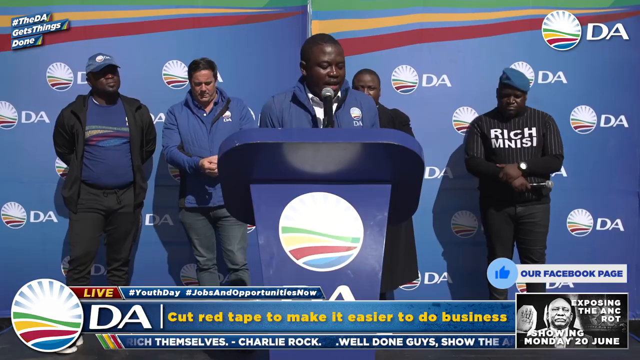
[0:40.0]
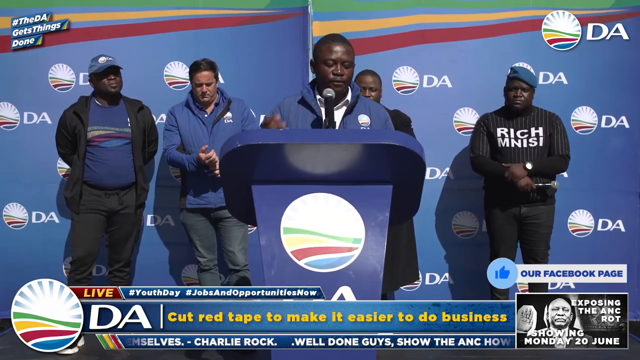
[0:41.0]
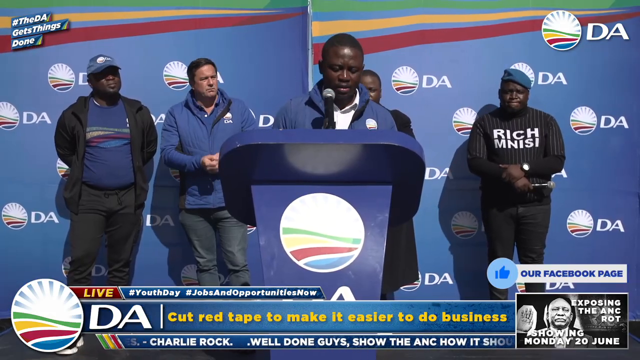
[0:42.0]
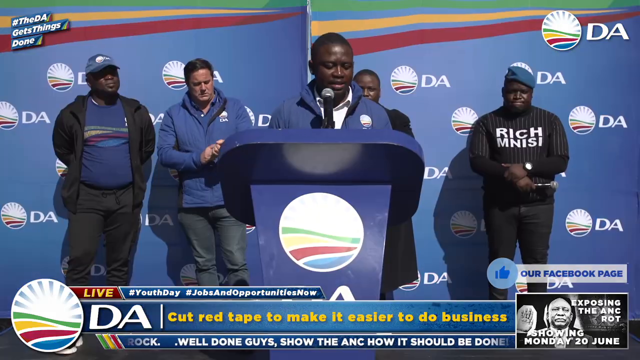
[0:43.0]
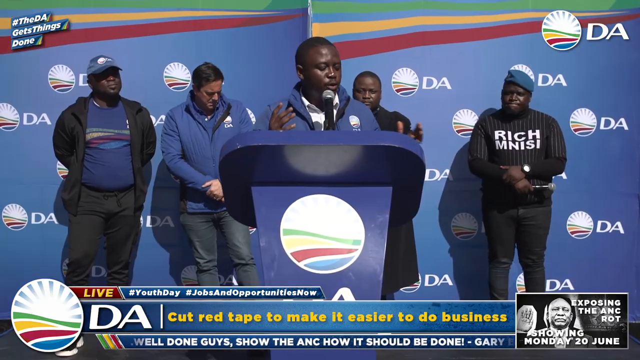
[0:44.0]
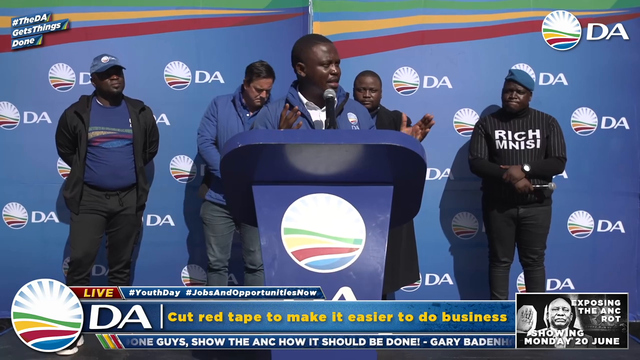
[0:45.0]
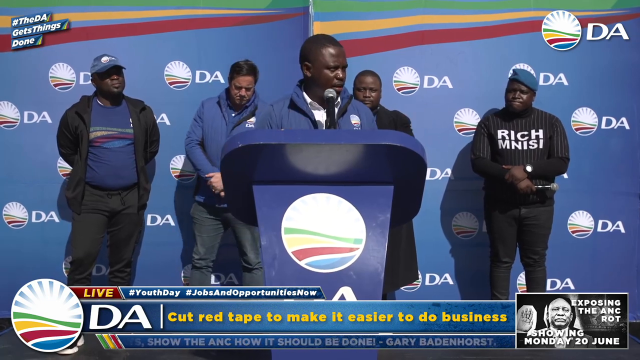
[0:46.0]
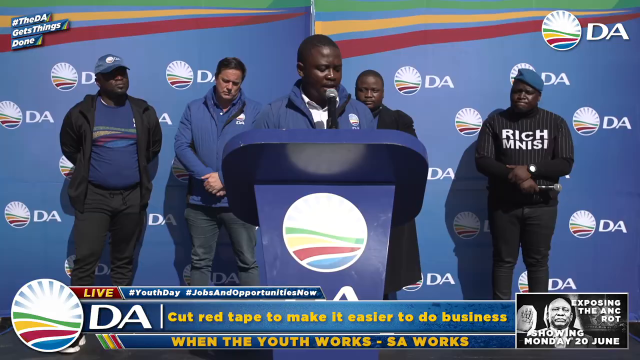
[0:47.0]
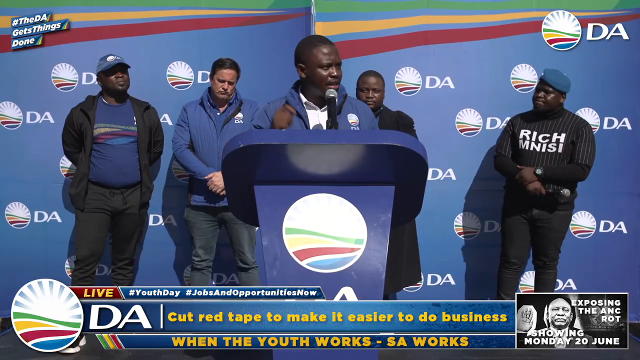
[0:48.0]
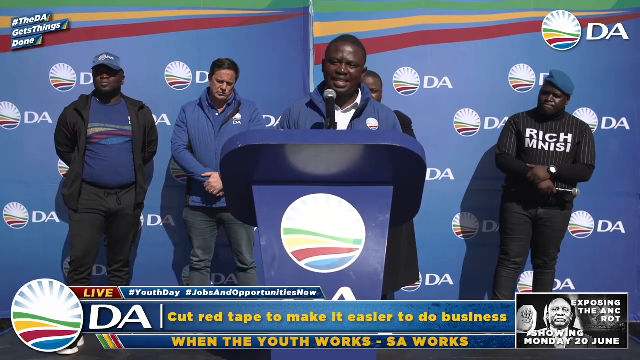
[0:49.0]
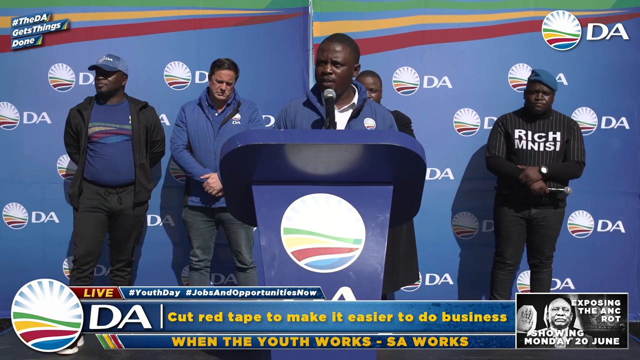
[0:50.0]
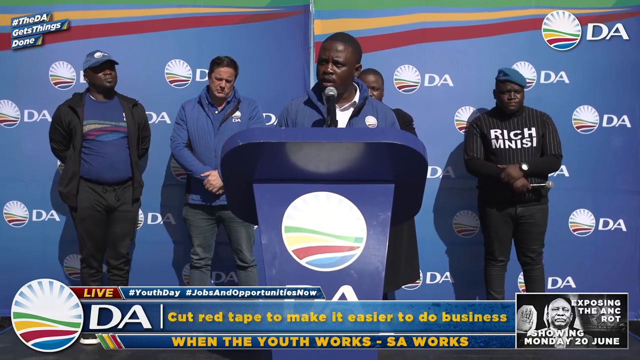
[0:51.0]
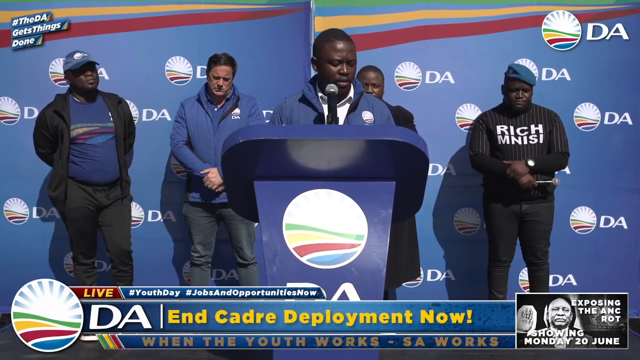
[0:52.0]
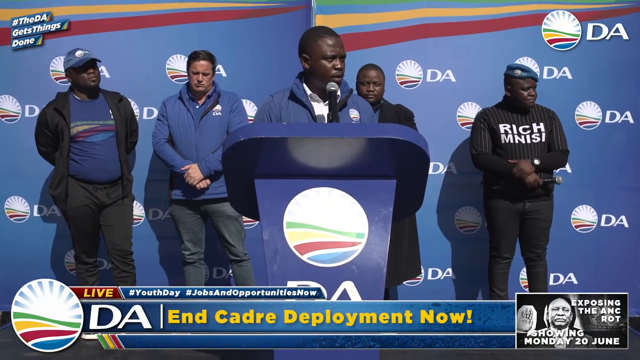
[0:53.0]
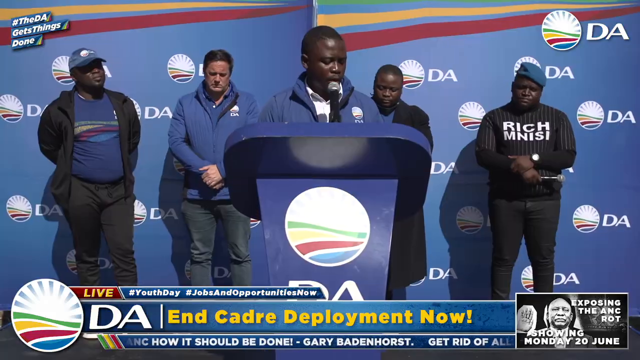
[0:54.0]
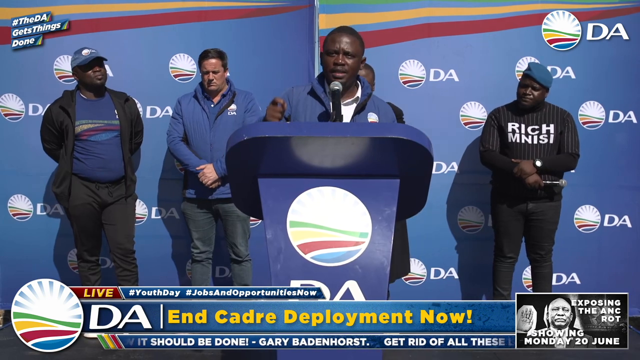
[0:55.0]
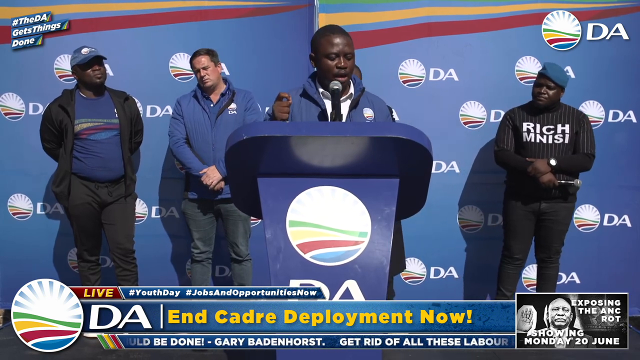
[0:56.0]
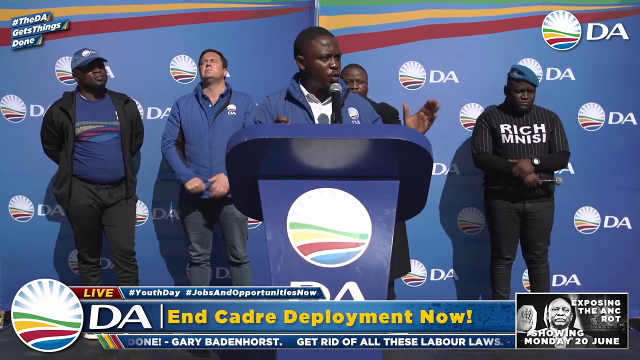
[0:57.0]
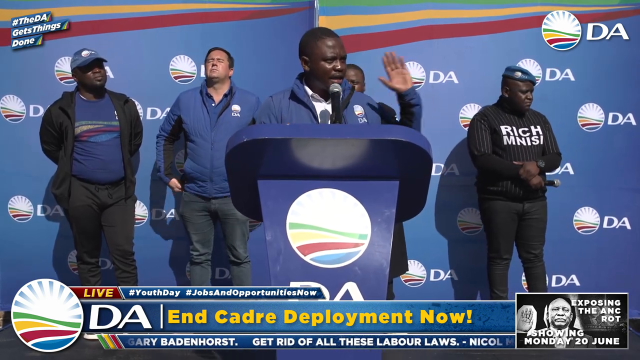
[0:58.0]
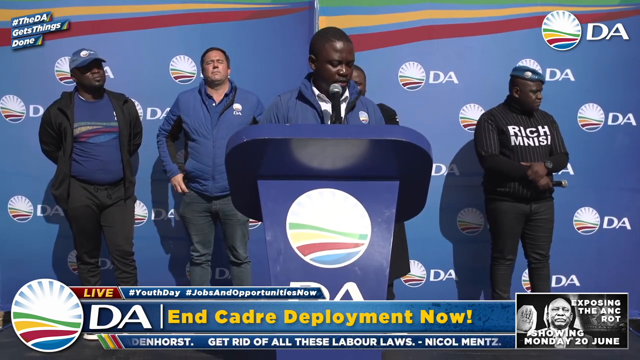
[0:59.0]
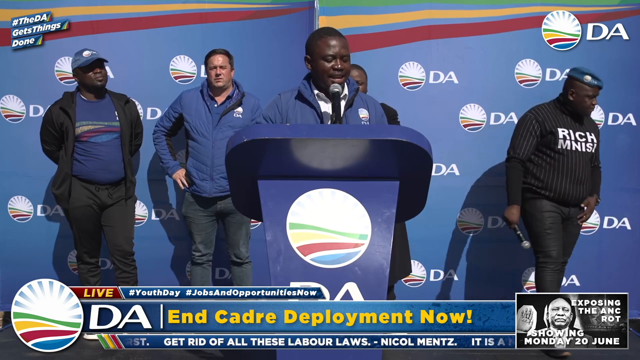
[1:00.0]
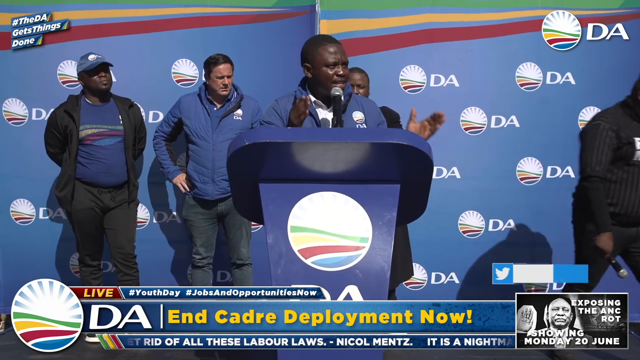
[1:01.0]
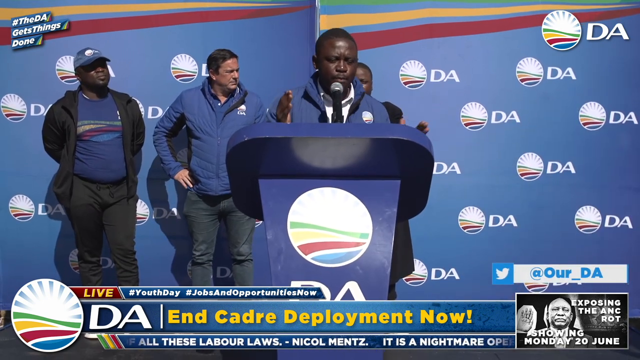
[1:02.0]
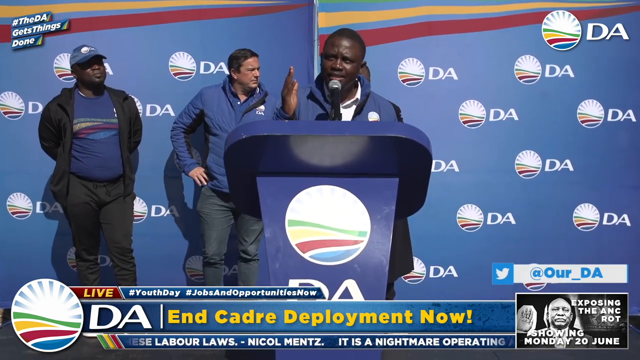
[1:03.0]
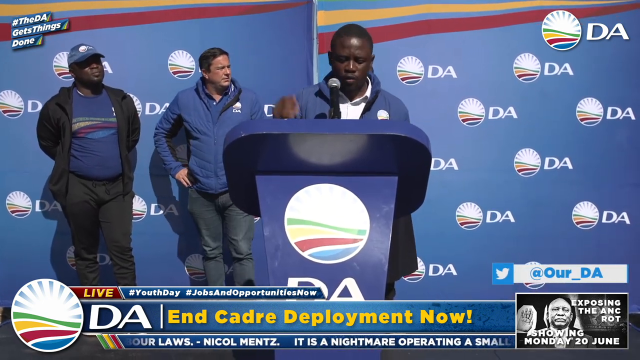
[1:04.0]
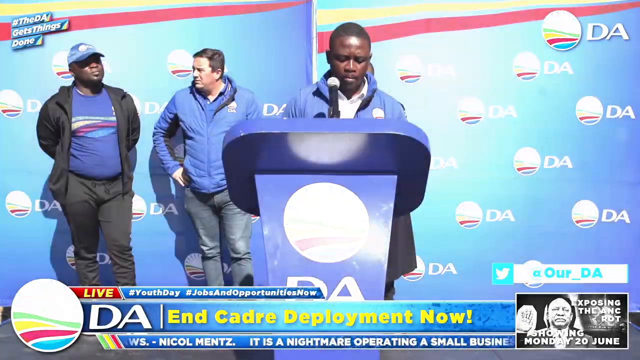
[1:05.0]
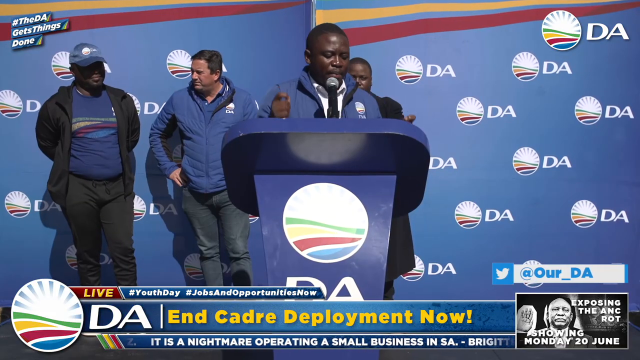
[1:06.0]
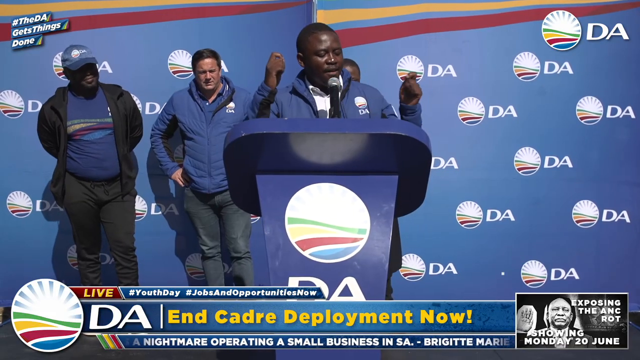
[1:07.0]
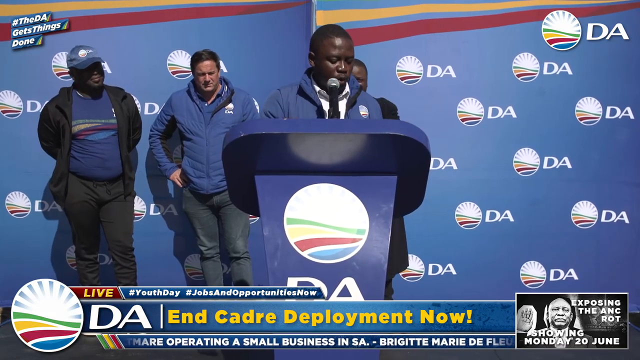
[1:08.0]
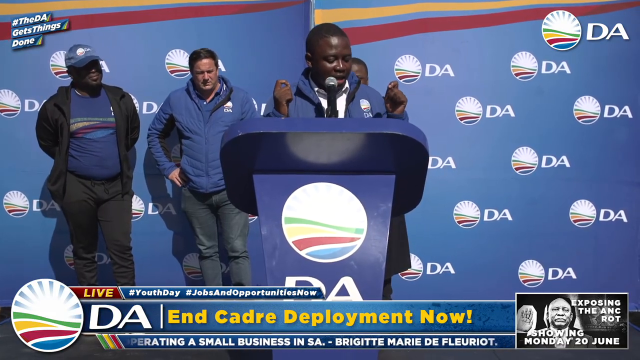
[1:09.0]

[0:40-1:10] The banner at the bottom of the screen now reads "cut red tape to make it easier to do business." The ticker seems to be adding bullet points or key parts of the speech, or possibly demands from the organization DA. As the man talks, it changes to "end cadre deployment now." Underneath it runs small white text that looks like quotes from people struggling with current labor laws and the difficulty of small businesses in SA. In the lower right corner is a small black-and-white picture that seems to advertise another program or show; its text begins "exposing the" and includes "showing Monday the 20th of June." A man in the picture has his left hand raised.